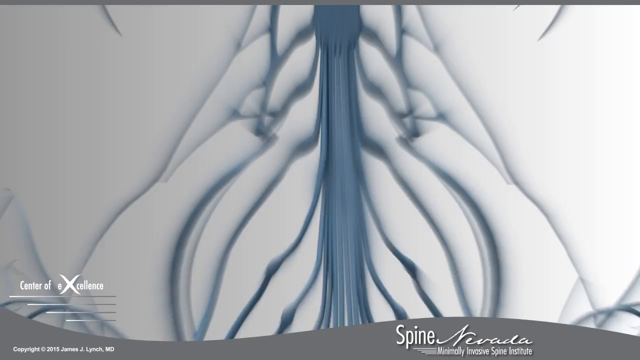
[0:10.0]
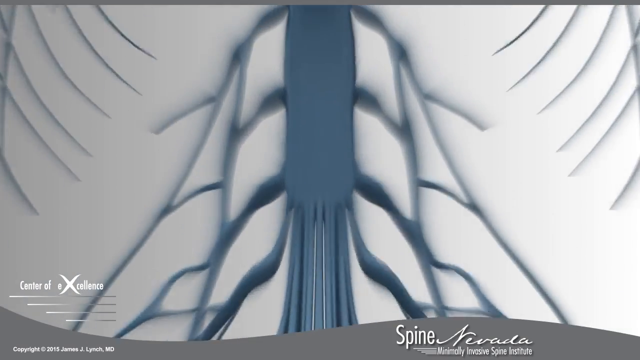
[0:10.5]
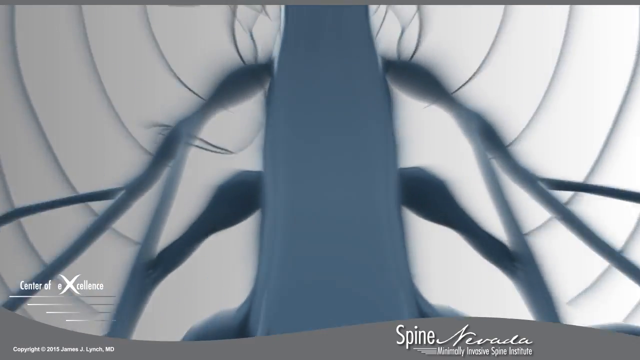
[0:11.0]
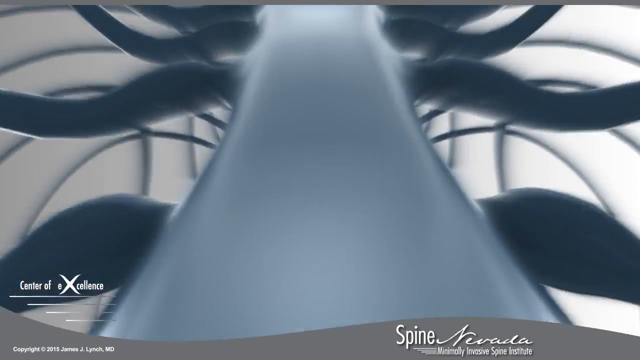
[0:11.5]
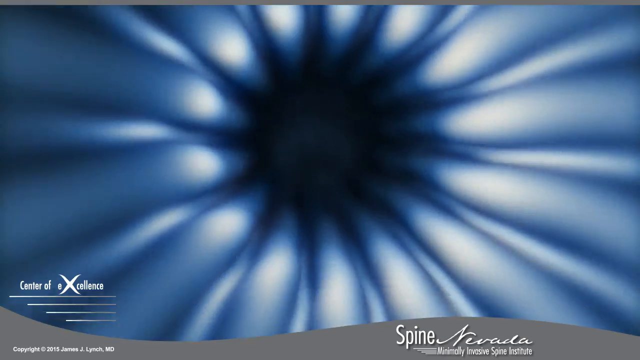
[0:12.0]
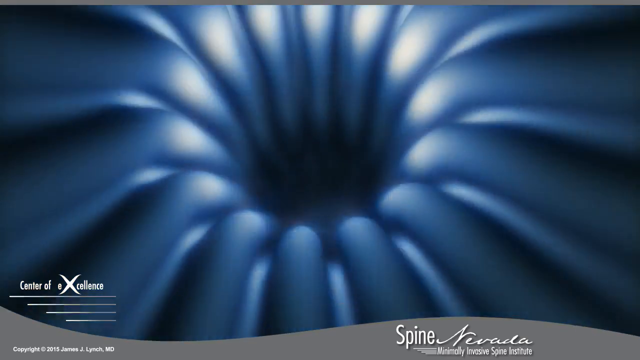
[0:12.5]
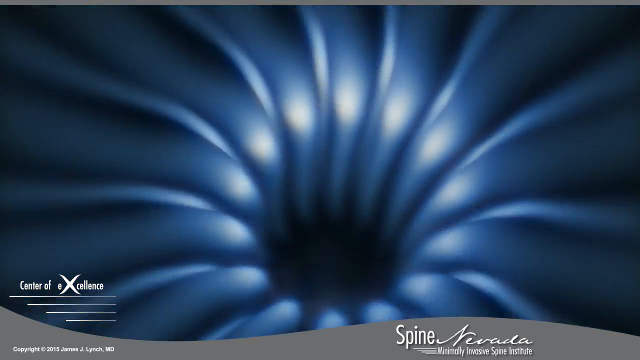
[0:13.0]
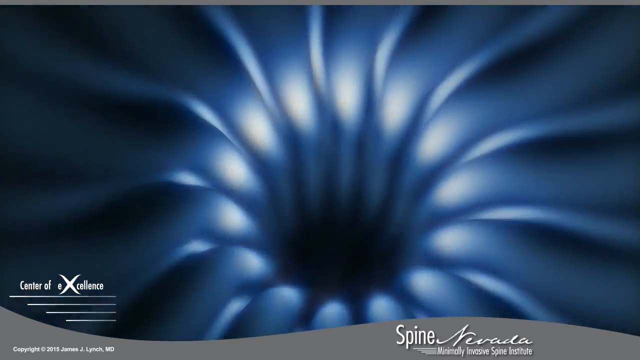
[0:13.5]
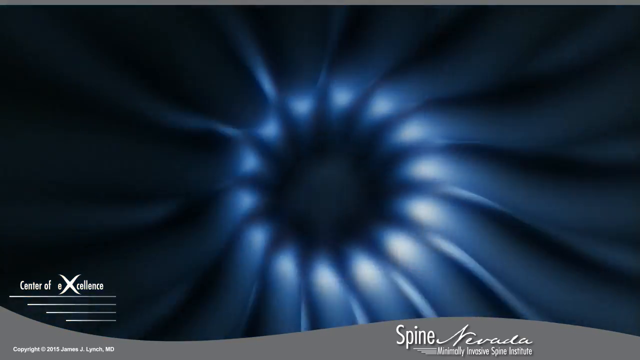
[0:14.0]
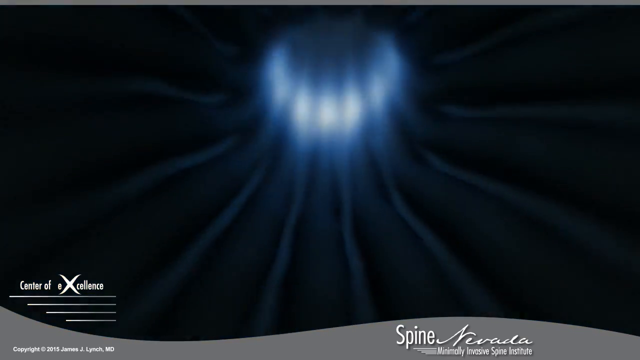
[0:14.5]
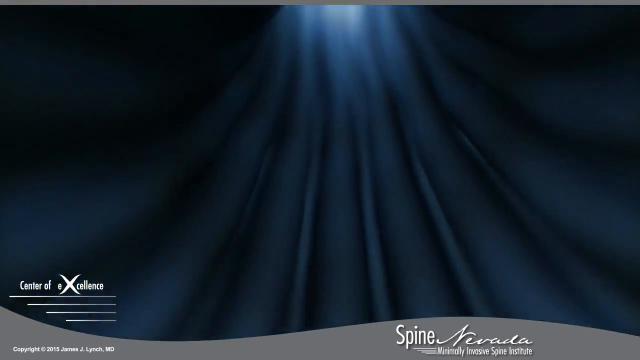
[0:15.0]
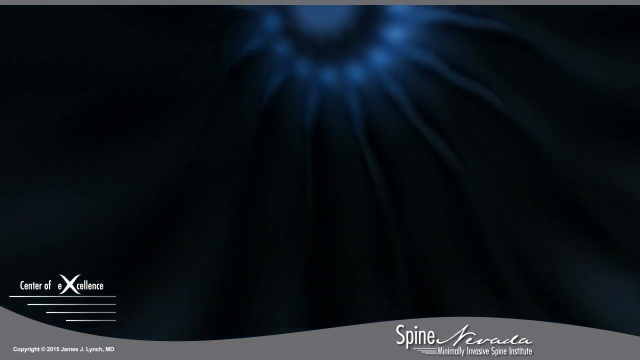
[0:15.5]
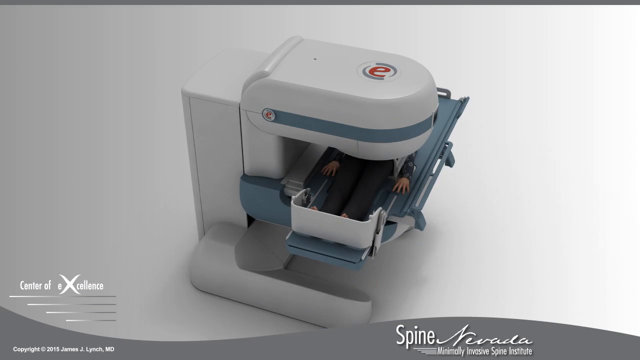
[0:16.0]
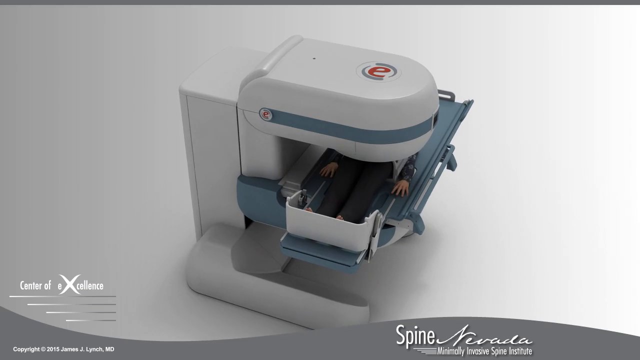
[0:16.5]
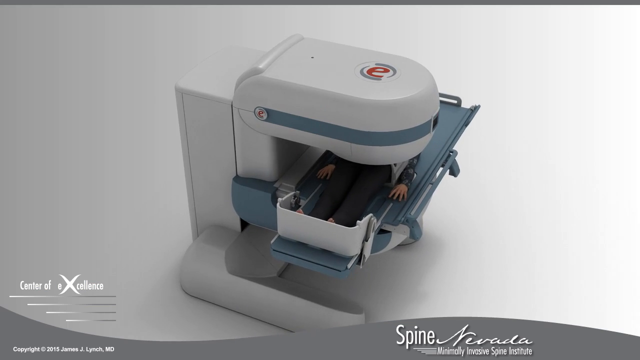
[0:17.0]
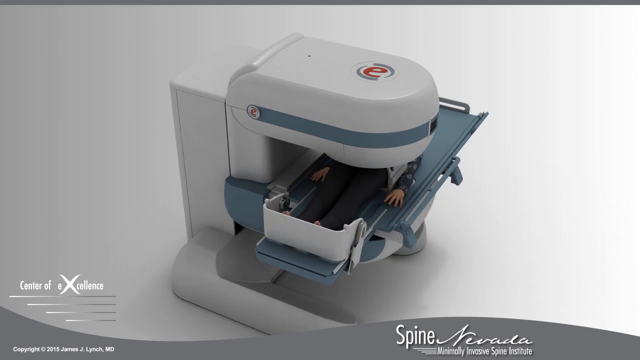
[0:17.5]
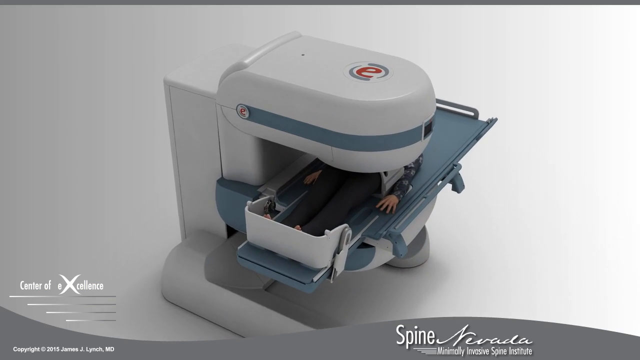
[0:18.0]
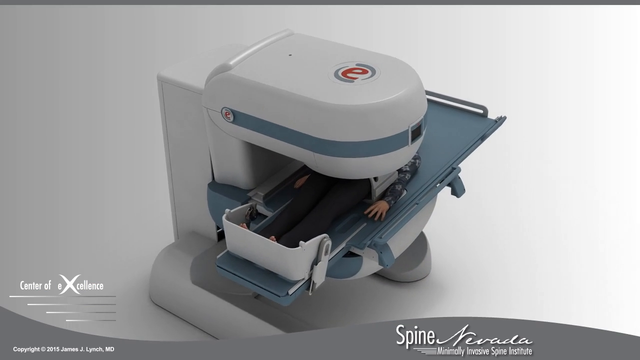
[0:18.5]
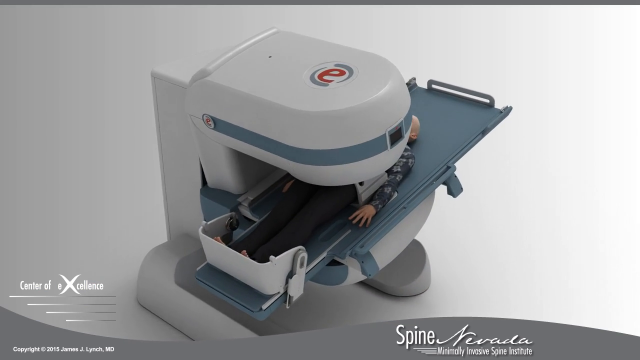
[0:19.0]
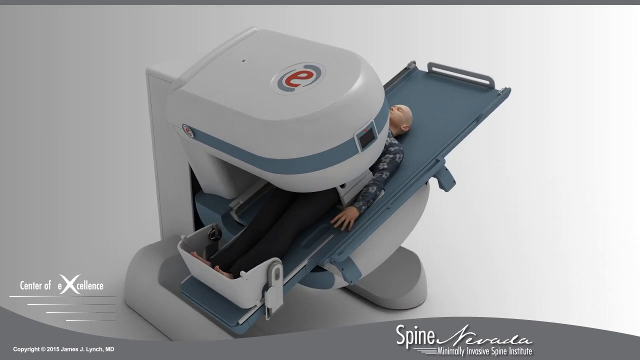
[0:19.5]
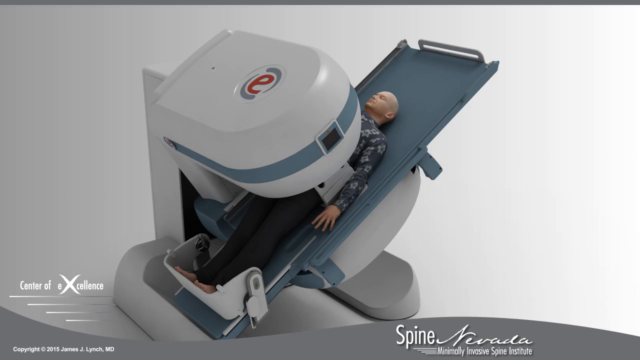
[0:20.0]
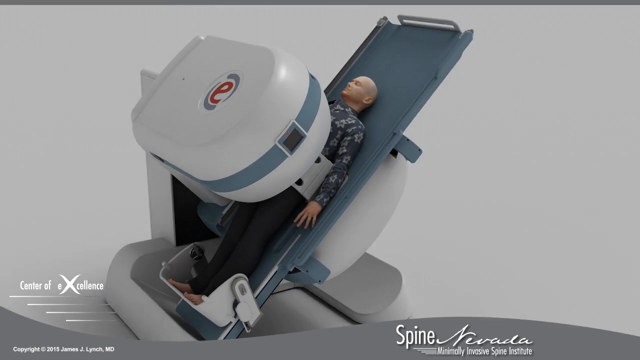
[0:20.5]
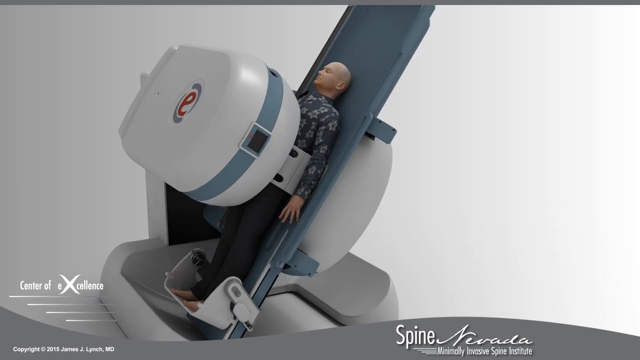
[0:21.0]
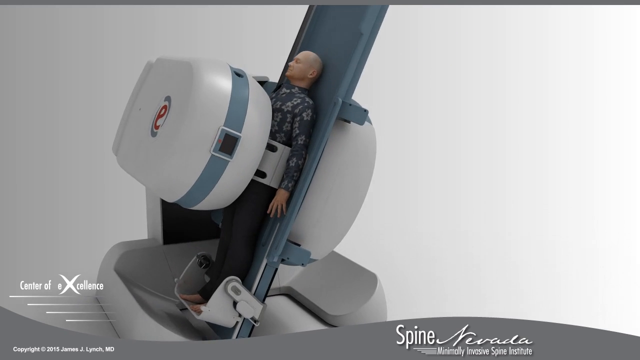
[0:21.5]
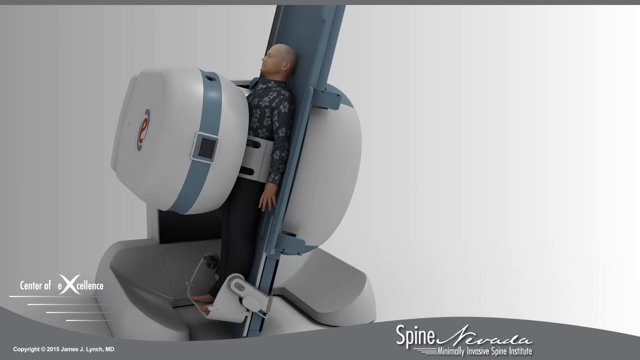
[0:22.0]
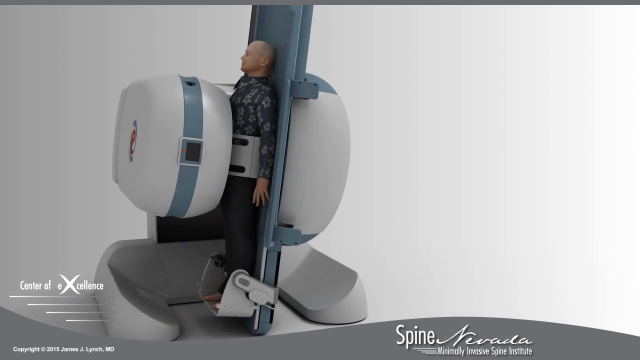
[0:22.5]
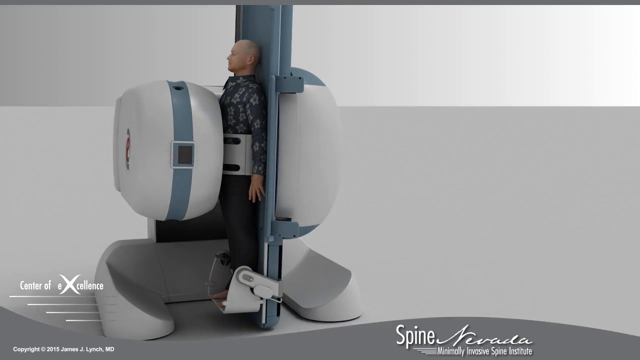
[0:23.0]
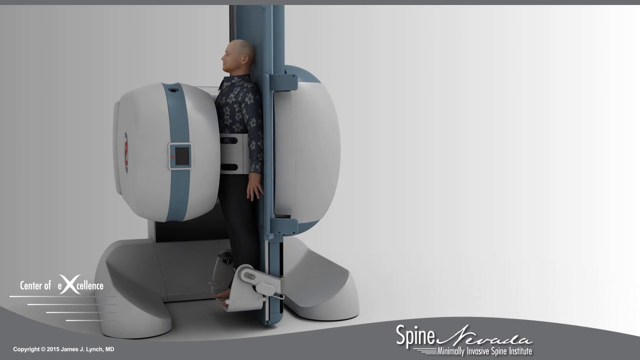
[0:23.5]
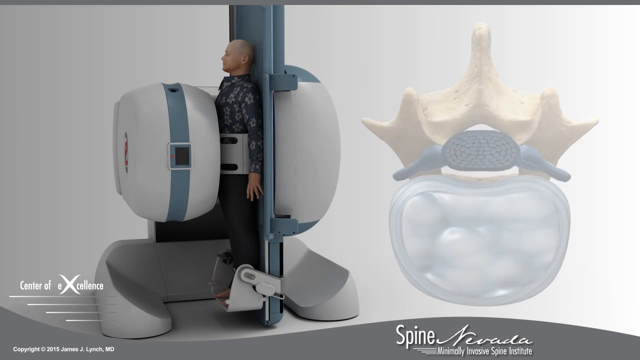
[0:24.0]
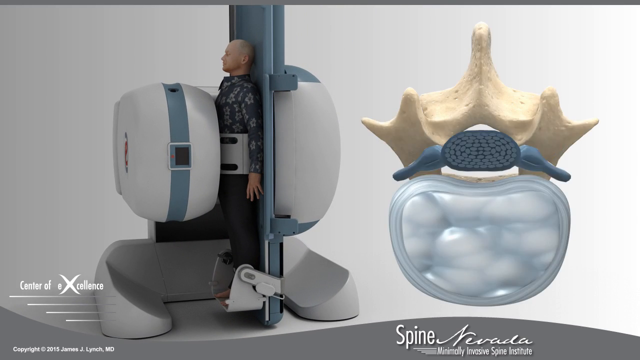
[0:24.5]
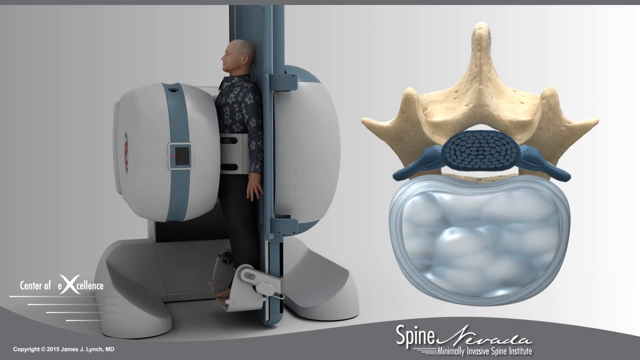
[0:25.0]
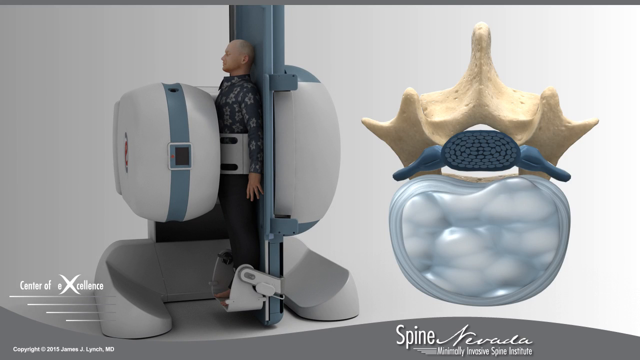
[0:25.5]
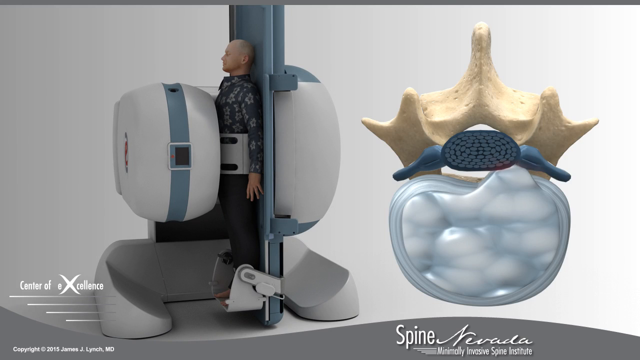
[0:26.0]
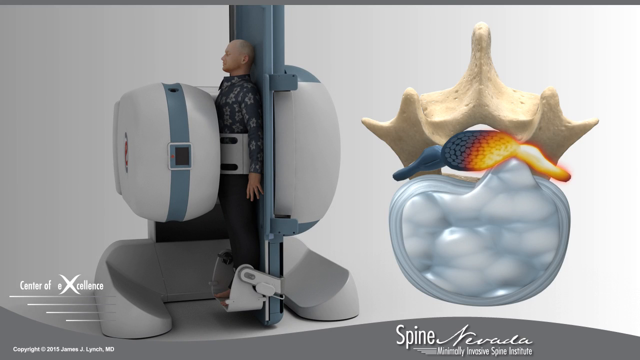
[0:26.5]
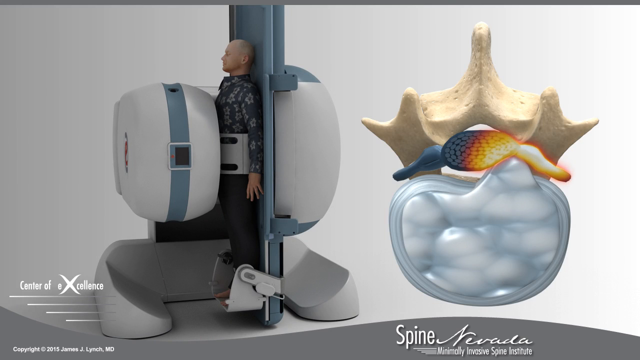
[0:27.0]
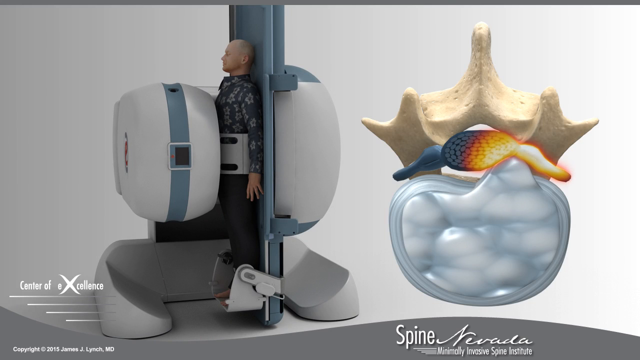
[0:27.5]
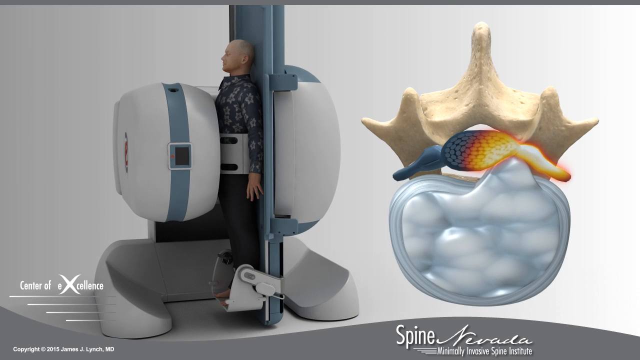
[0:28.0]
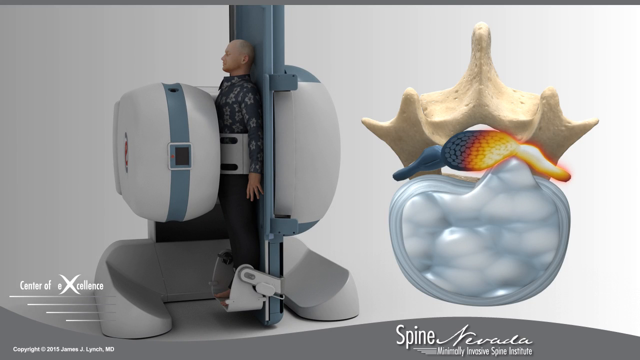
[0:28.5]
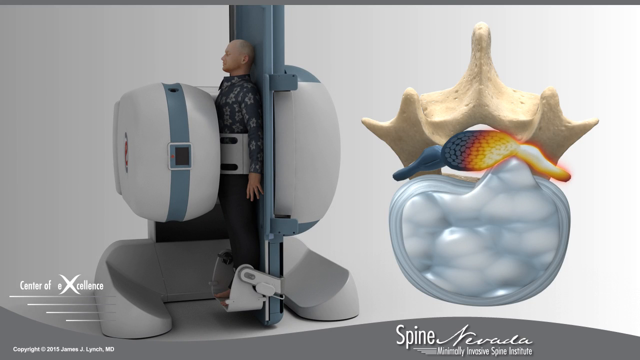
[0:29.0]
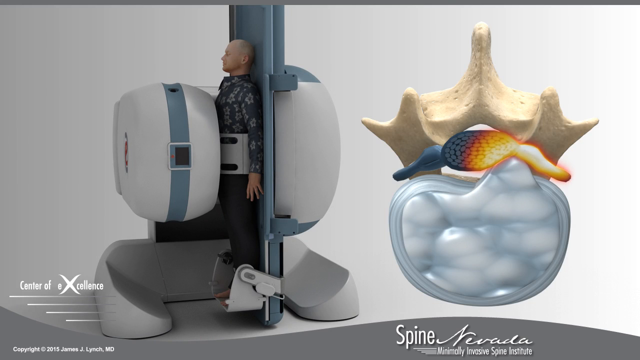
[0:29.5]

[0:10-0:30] The camera view starts going up the spine and looks as if it is entering it, giving a view almost like a ride traveling up the spine. The space is a dark blue color, with ridges around the opening being traveled through. The view then looks down onto a machine, slowly traveling and moving to the right. The machine holds a person who starts out in a horizontal position, and the machine moves to bring the person into a vertical position. Flashes appear on the screen as if pictures or x-rays are being taken of the person on the machine. On the right side a small diagram appears, like a cross-section of a vertebra and the spinal cord, showing the spinal cord touching the vertebra in one area, and some red appears, probably indicating inflammation and pain.